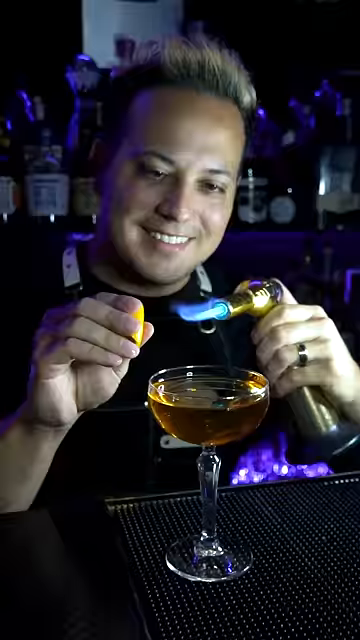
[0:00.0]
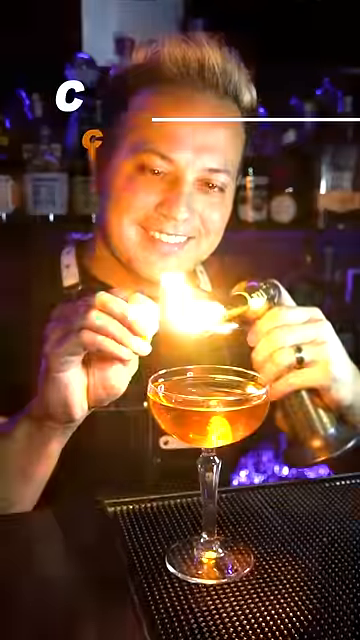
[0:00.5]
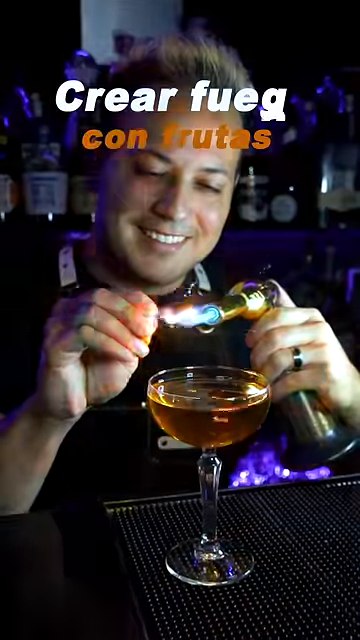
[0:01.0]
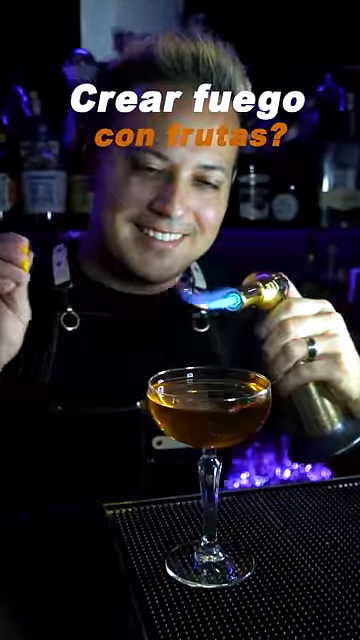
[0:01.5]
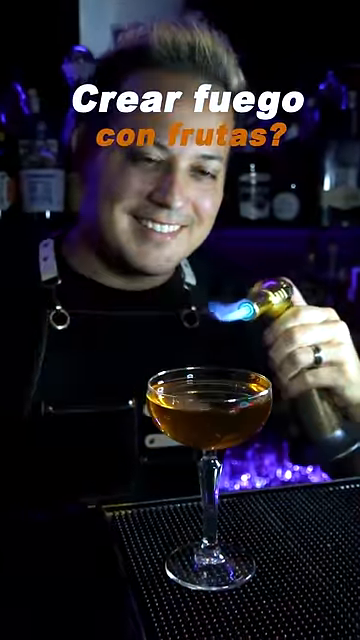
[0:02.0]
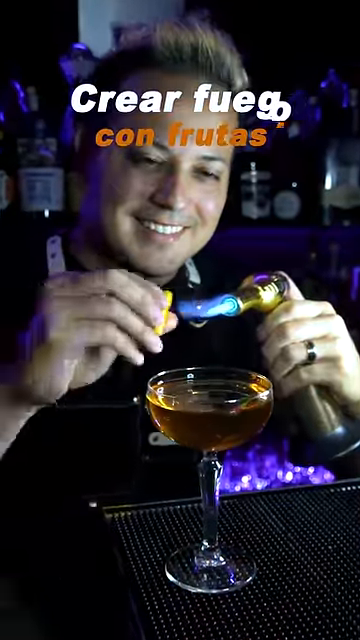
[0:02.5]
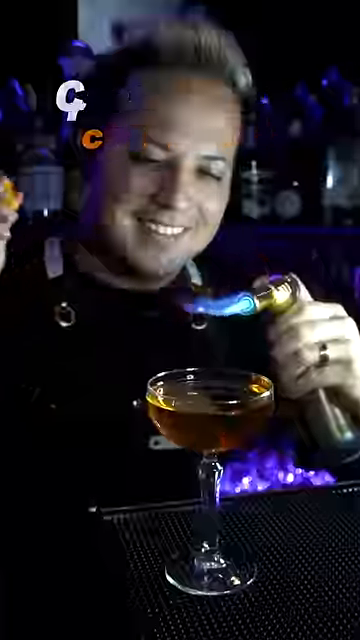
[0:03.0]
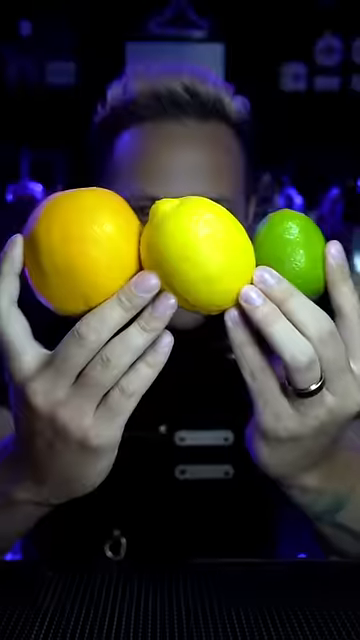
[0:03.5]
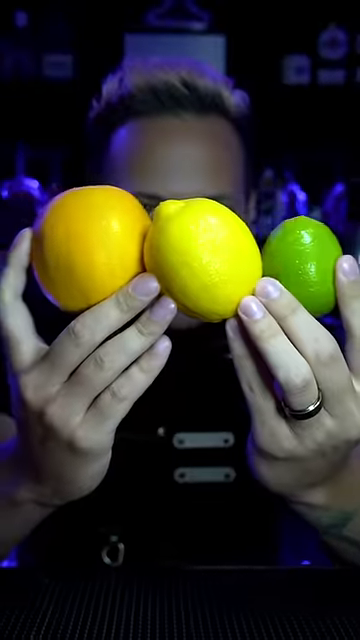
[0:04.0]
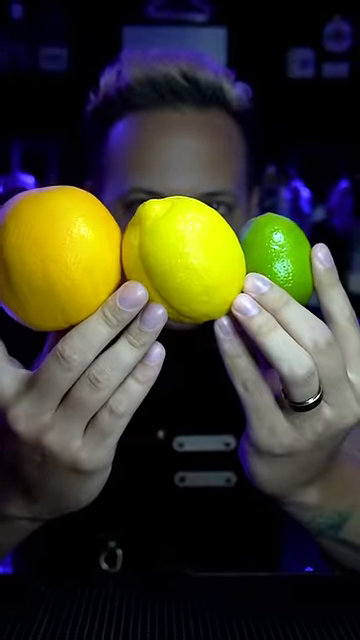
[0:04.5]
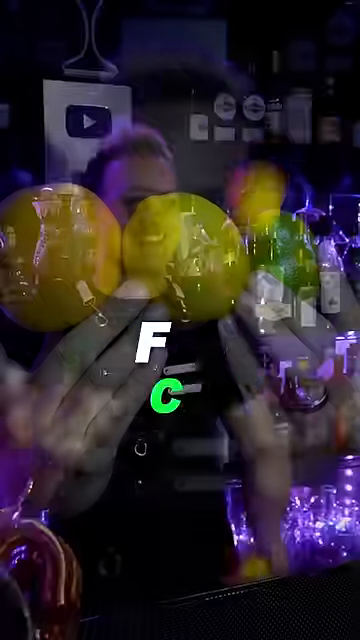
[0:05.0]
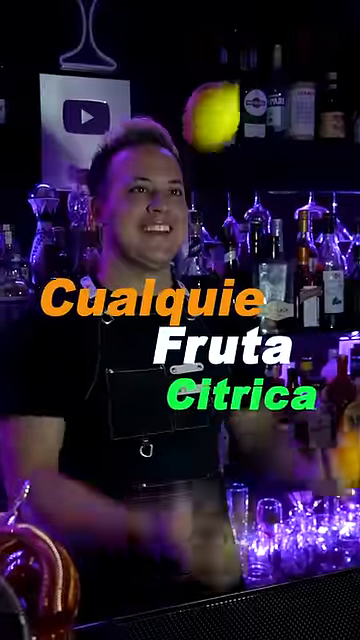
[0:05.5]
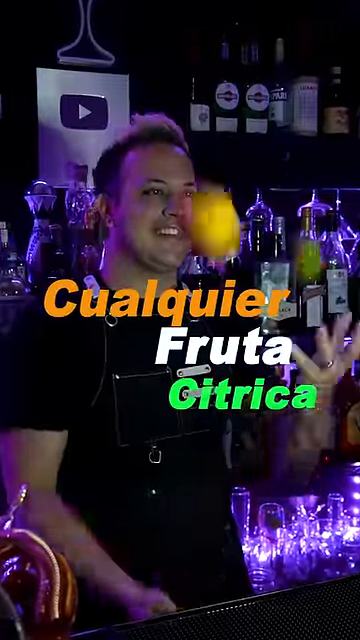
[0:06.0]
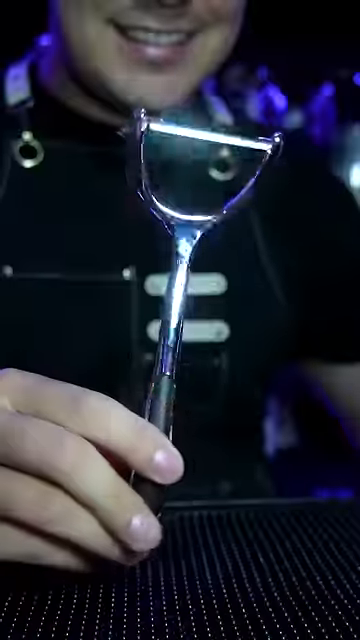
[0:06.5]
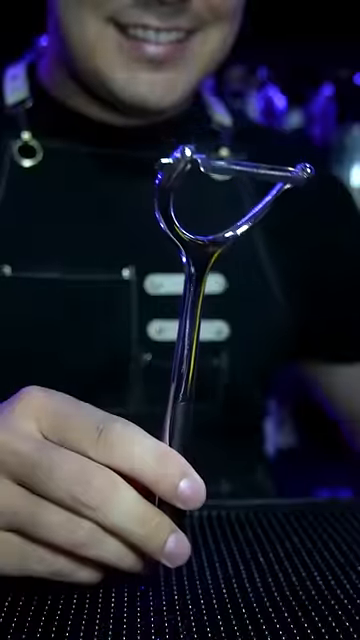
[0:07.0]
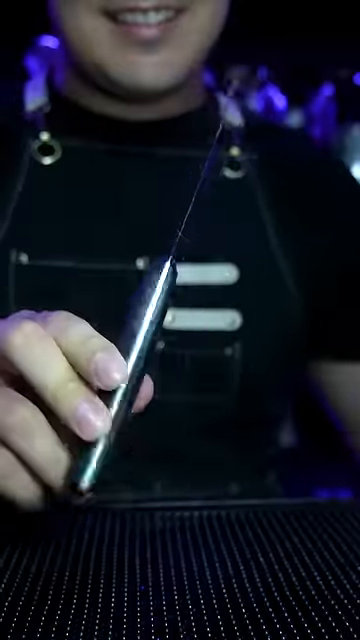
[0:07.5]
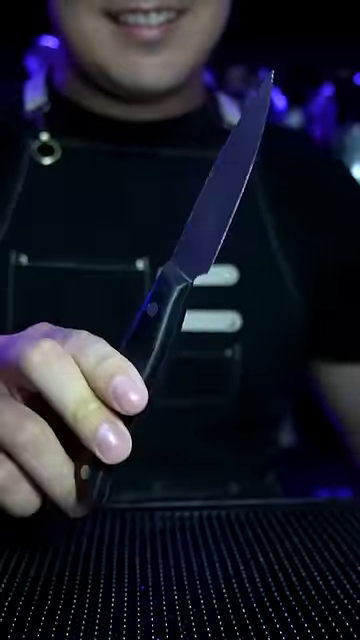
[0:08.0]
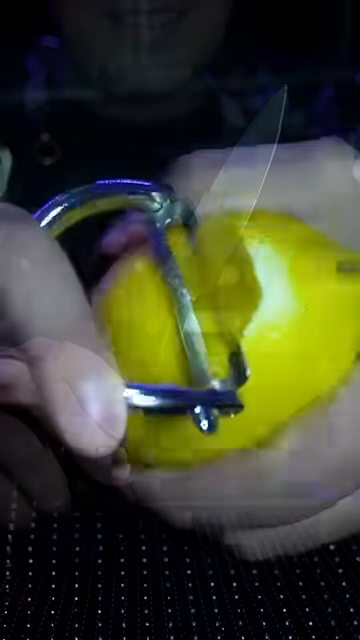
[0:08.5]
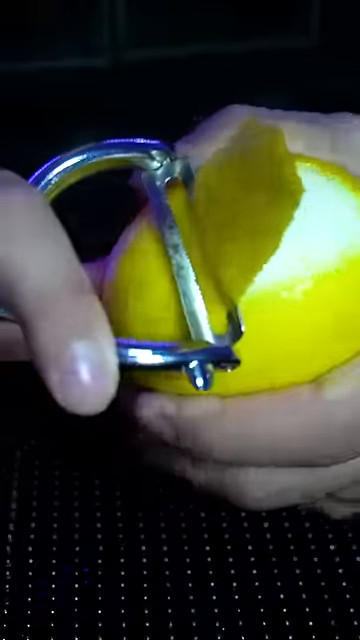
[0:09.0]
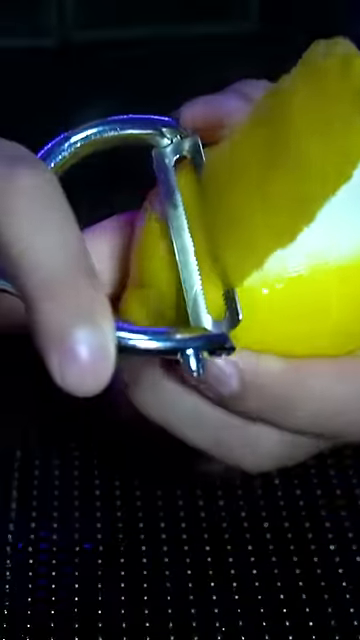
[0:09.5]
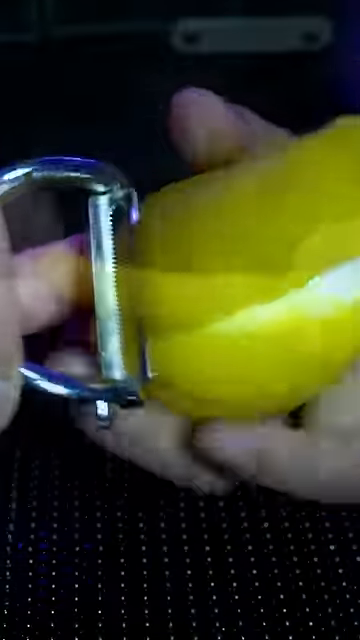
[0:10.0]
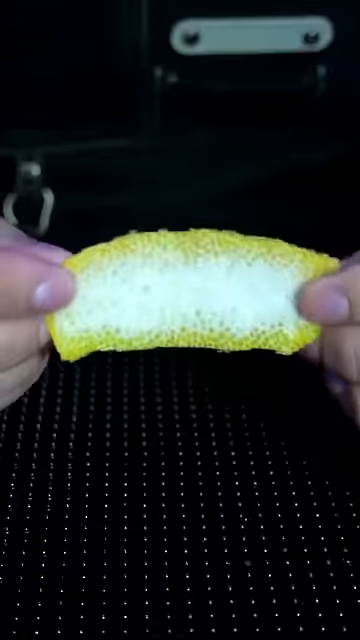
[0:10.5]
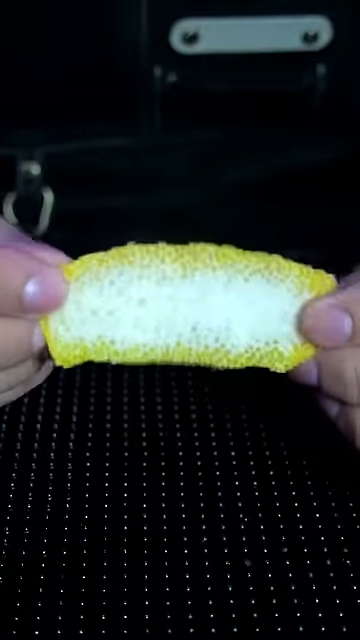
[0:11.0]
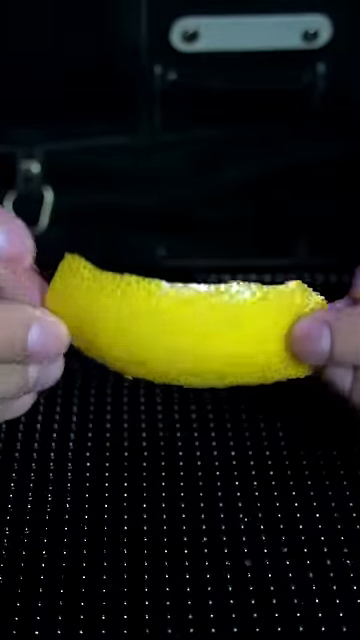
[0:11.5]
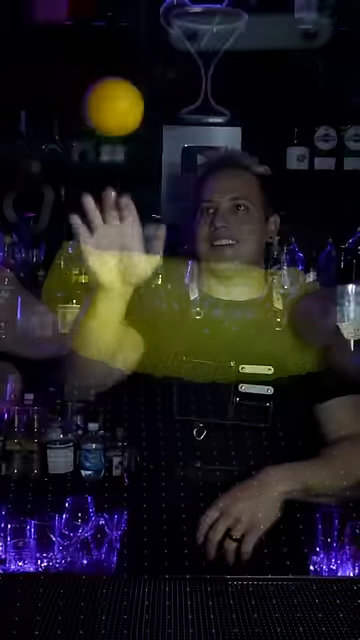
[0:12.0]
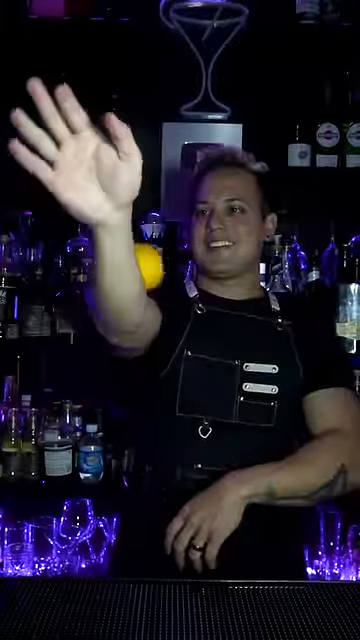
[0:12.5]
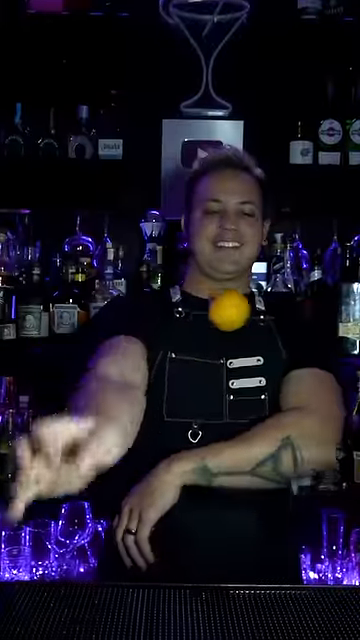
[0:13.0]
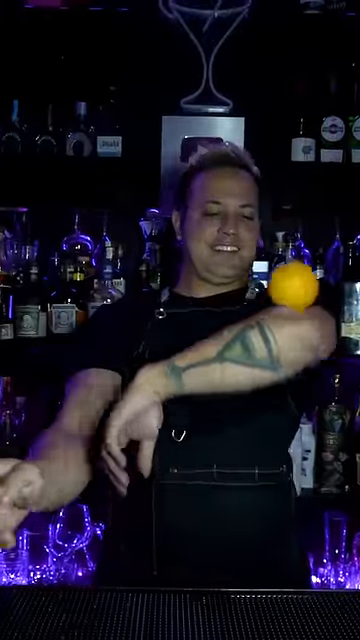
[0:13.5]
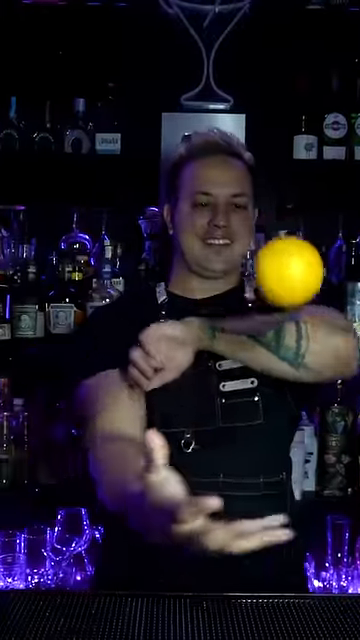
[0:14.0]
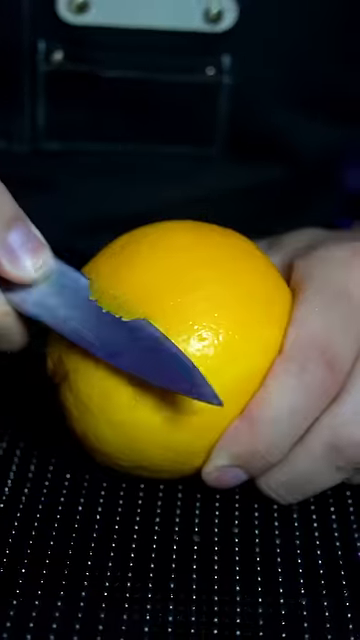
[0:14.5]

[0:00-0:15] A man lights a torch over a glass, then juggles some fruits, an orange, a lemon and a lime. He shows a peeler and a paring knife, holds up a piece of orange zest, rolls an orange from one arm to the other across his body, and lights up something over the drink; what it is cannot be made out, but it is very dramatic. Some lettering appears too briefly to be read. He is a bartender in a nightclub, wearing a dark shirt, and his hair is kind of light tinted. He has a tattoo on the bottom of his forearm that looks like a drink. The background and bar area are very dark, and some black lights coming up from the bottom light some glasses in purple.